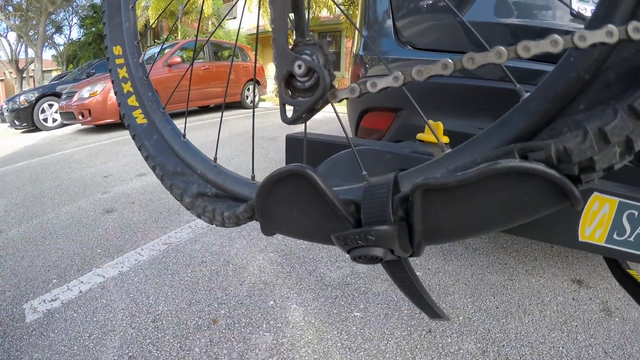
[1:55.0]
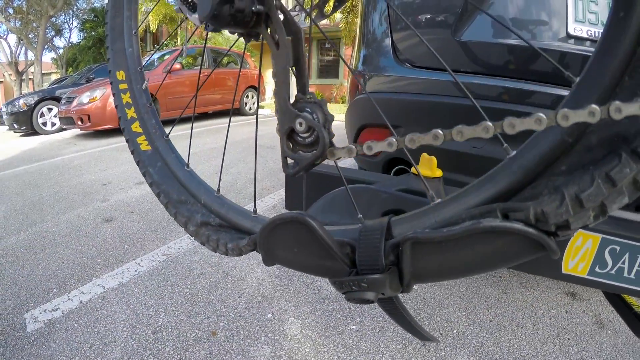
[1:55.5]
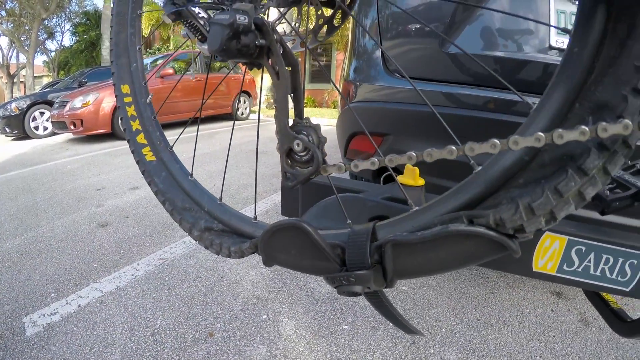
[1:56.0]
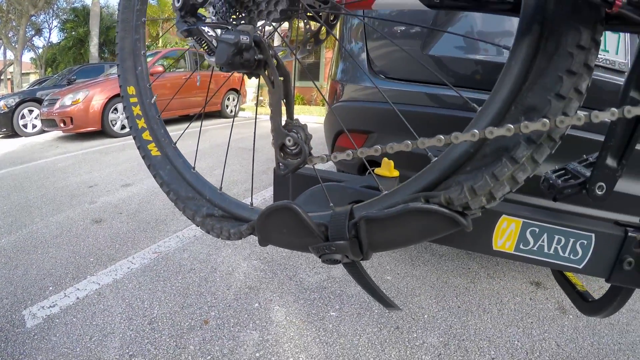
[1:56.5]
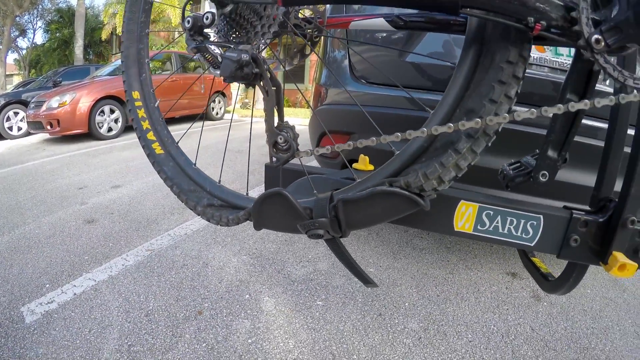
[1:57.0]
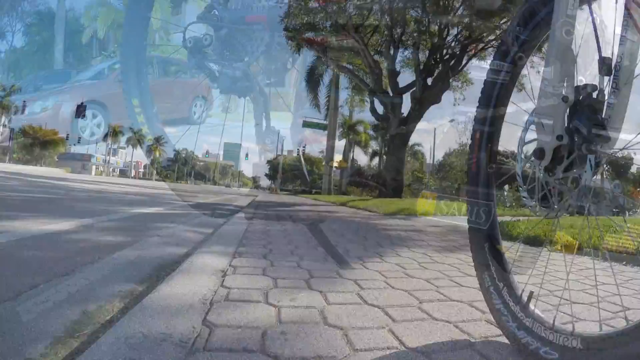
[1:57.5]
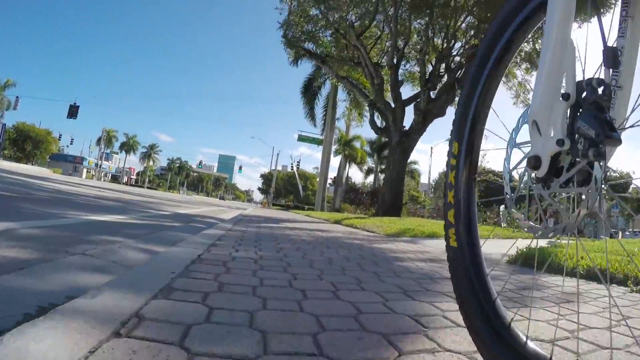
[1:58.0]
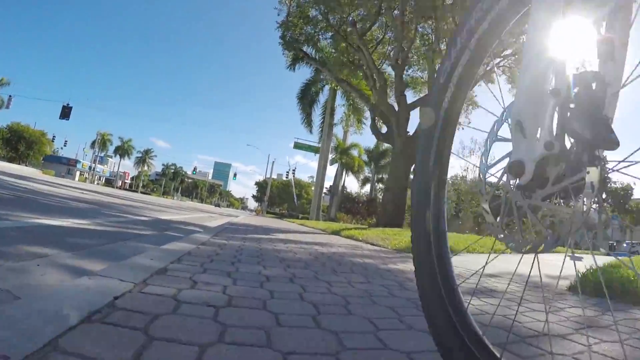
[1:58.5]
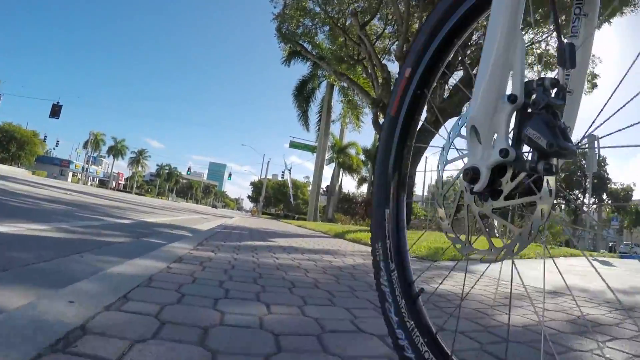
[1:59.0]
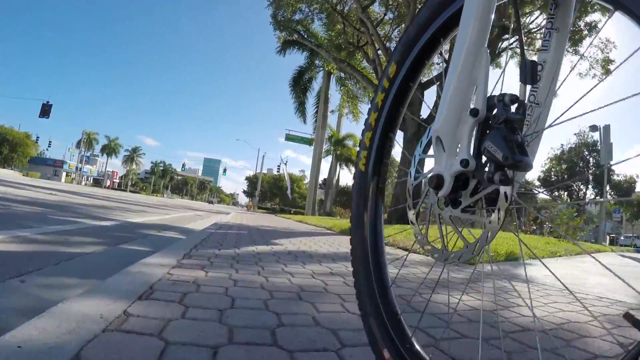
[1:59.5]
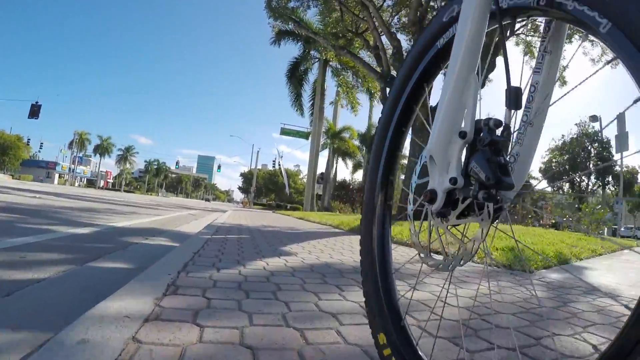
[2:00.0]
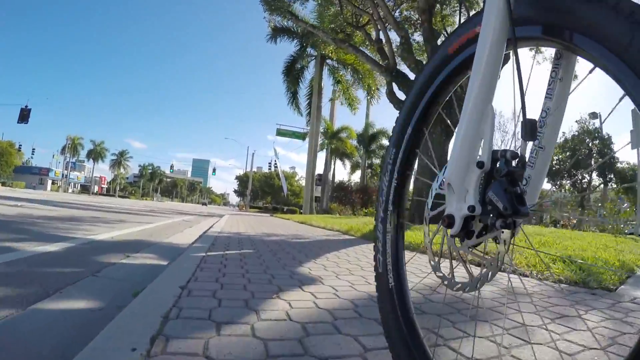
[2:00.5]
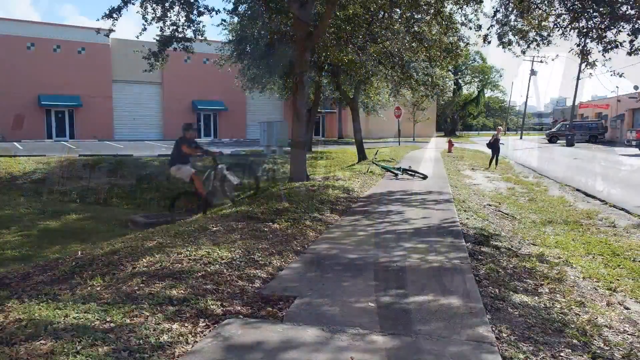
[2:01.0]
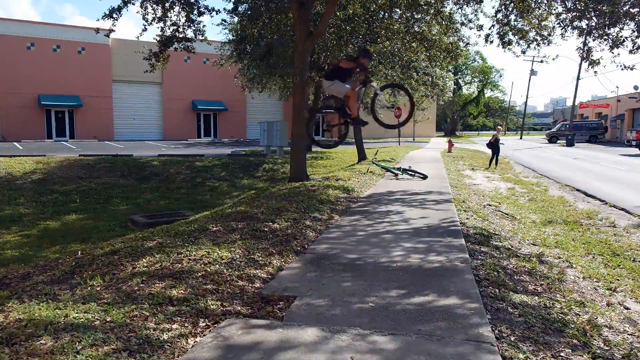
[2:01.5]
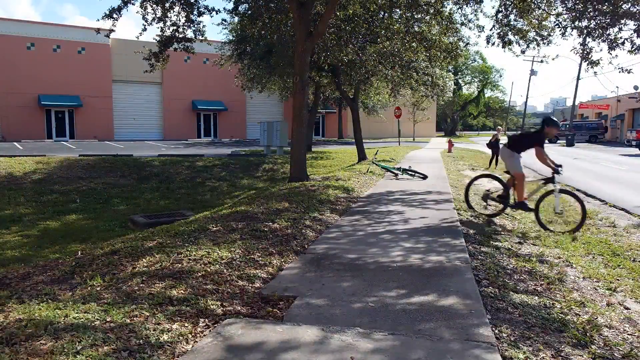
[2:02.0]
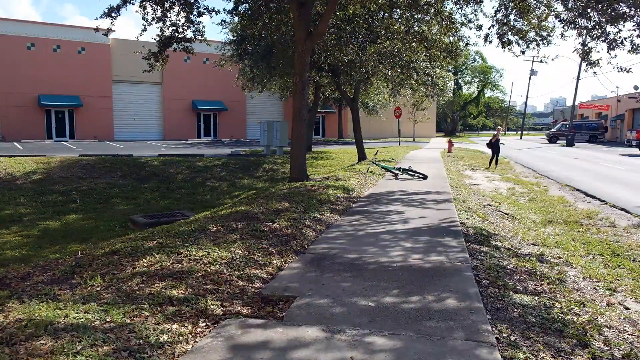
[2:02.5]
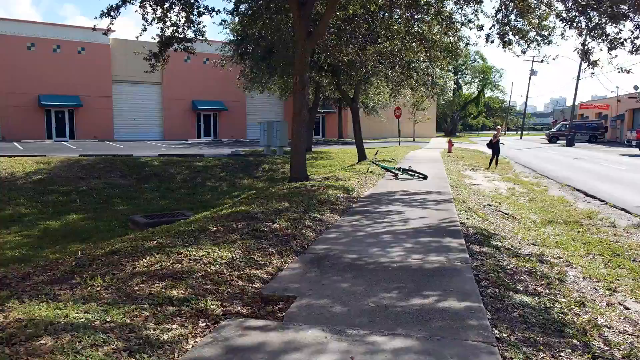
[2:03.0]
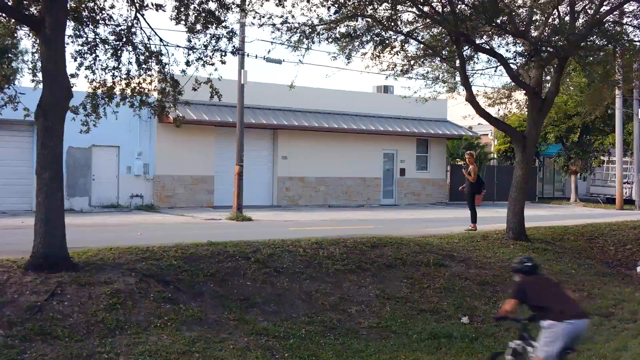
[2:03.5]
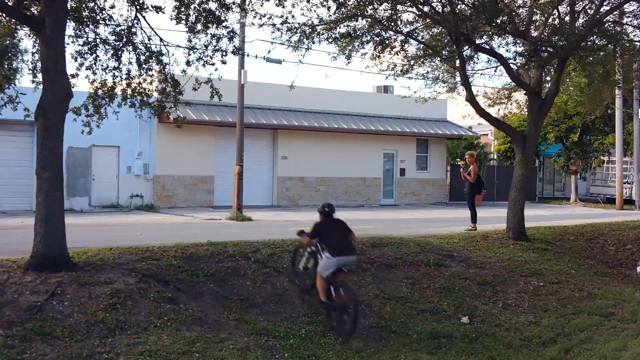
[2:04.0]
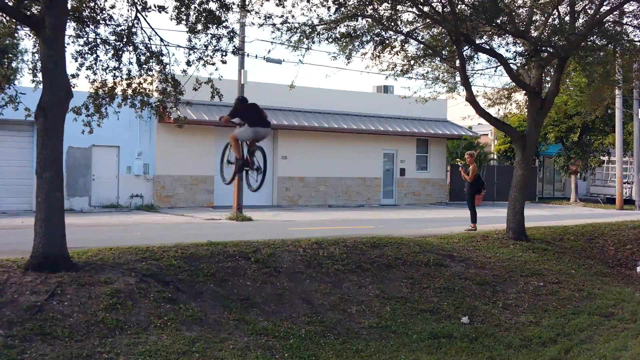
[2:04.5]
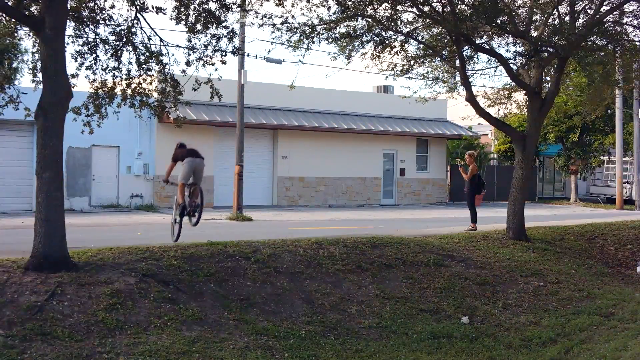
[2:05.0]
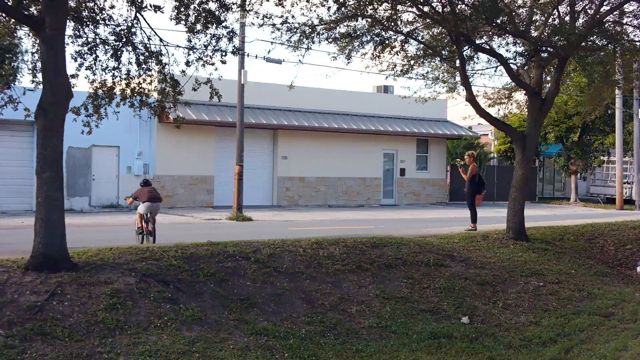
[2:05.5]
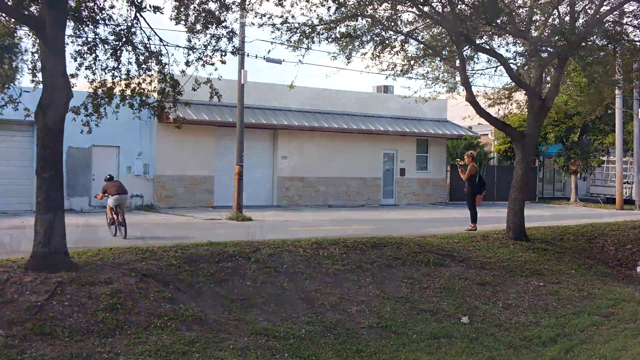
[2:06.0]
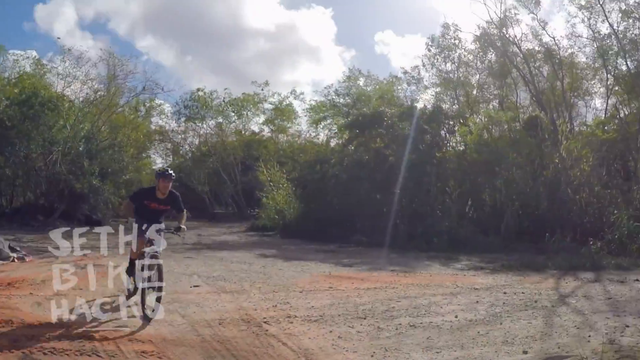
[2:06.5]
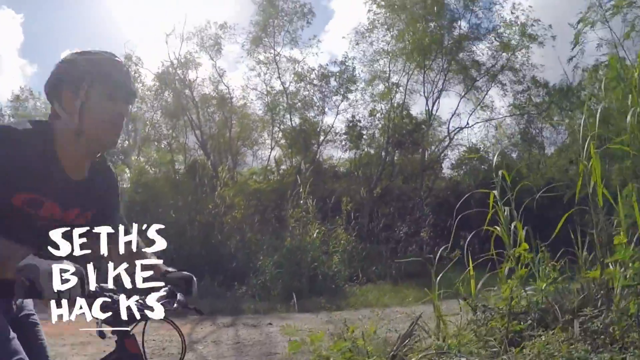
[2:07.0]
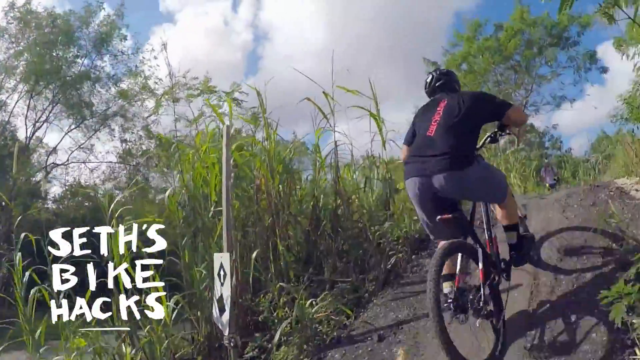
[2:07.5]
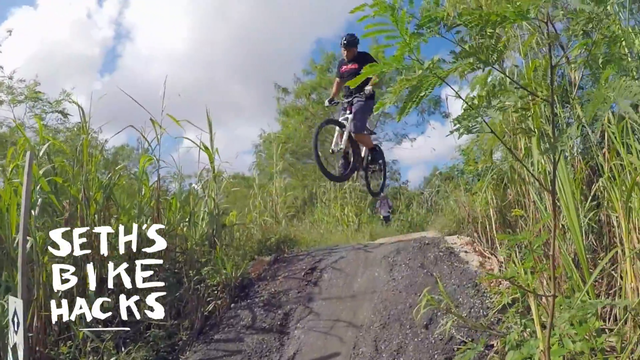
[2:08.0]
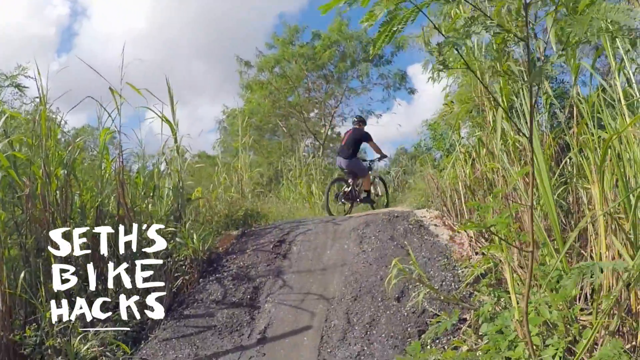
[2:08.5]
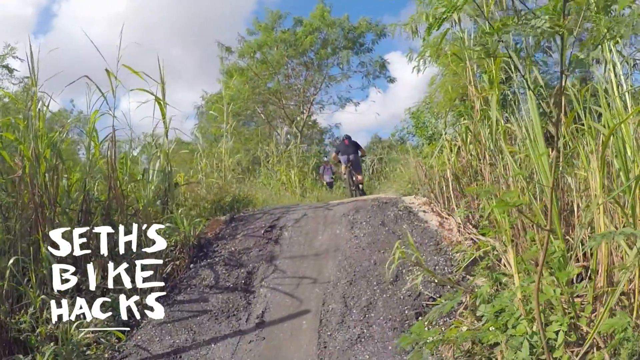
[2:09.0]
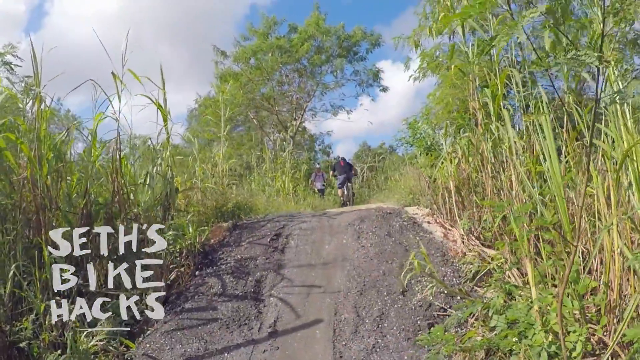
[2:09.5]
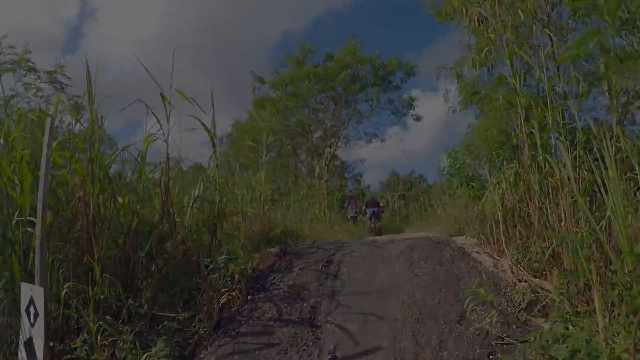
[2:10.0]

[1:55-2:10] A bicyclist is shown in exclusively outdoor settings, riding on what appears to be an urban road and sidewalk. He then jumps several large outdoor hills. One is at a sidewalk in a not very busy location that appears to be industrial, where he jumps a hill approximately four to five feet high across the sidewalk and lands on the other side. In the next shot, in a somewhat more desolate outdoor area, he jumps from a dirt road onto an elevated path, spins 360 degrees in the air, and lands on the path.